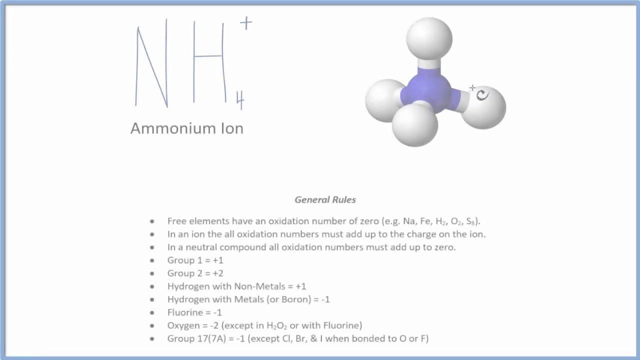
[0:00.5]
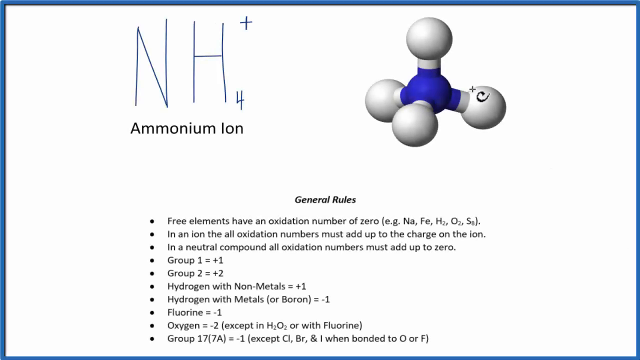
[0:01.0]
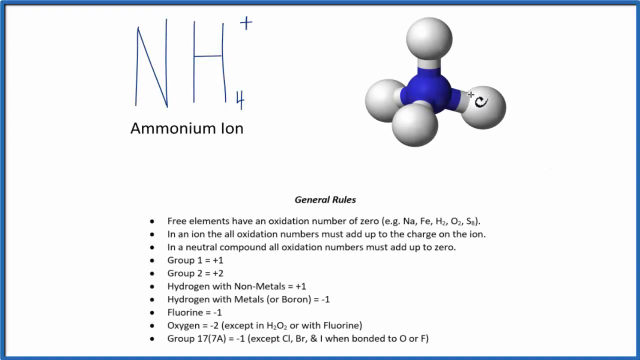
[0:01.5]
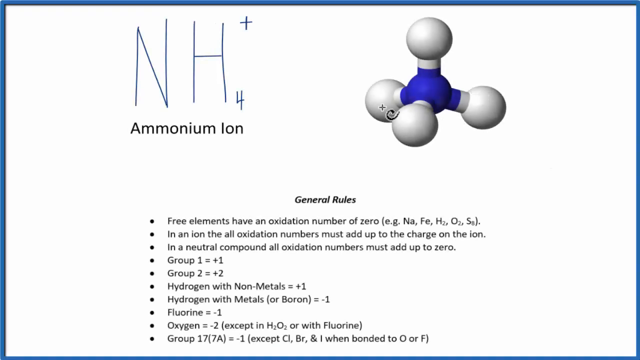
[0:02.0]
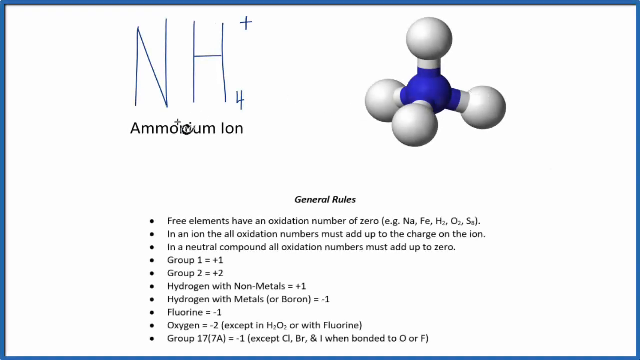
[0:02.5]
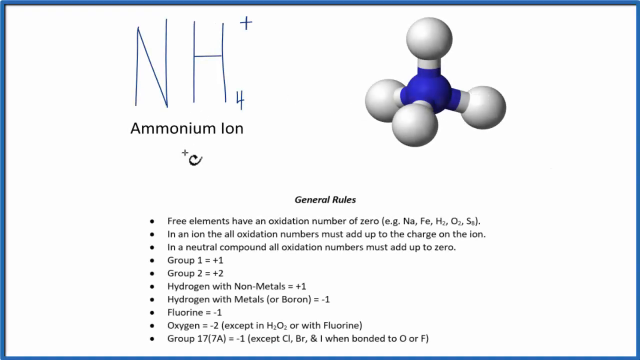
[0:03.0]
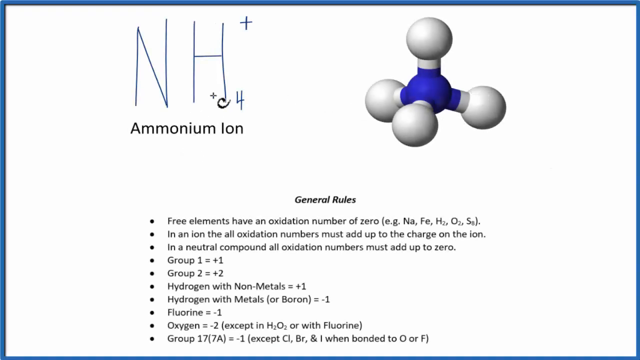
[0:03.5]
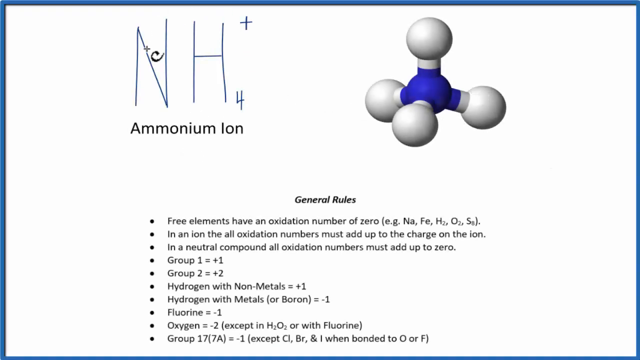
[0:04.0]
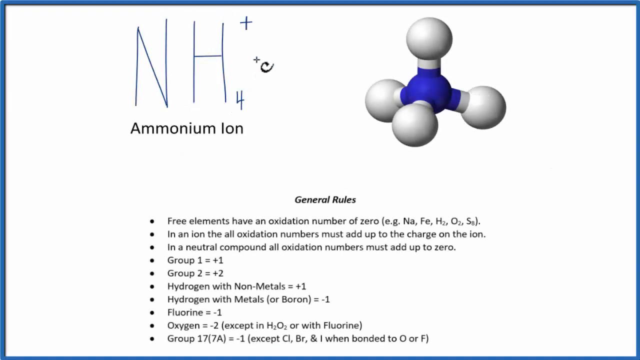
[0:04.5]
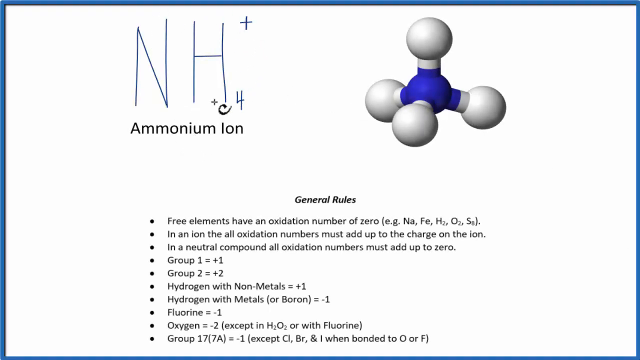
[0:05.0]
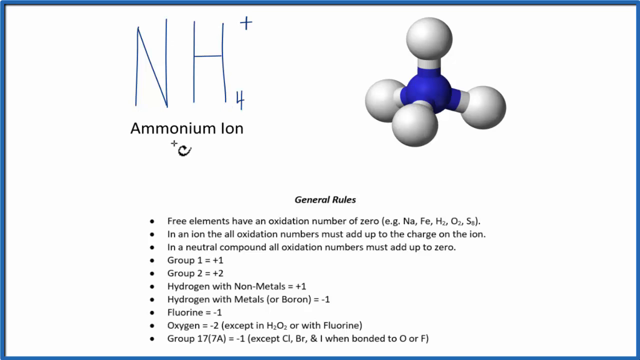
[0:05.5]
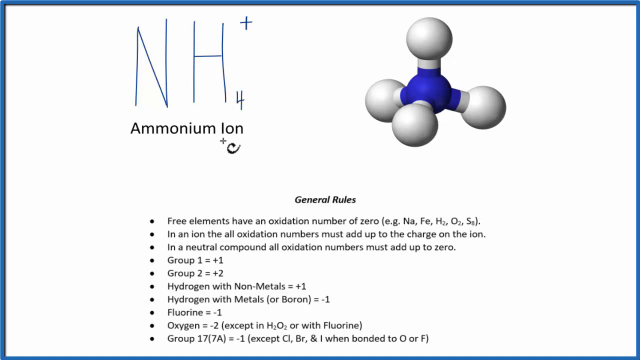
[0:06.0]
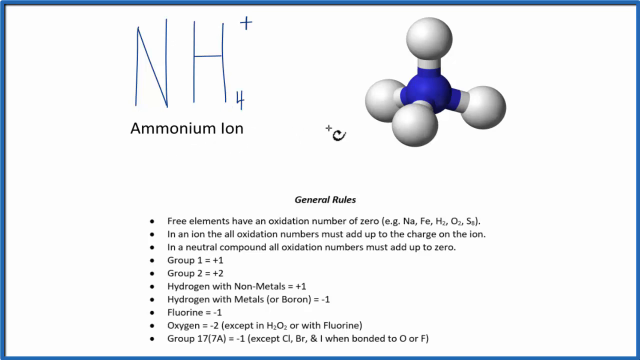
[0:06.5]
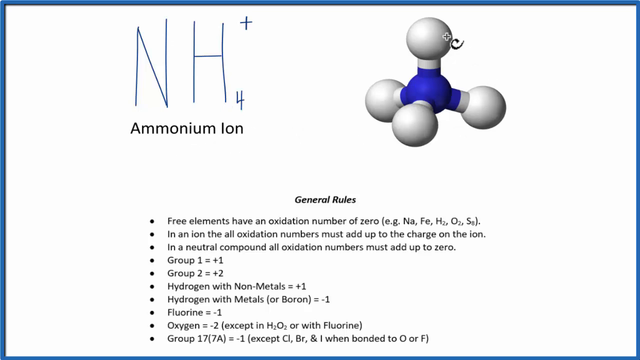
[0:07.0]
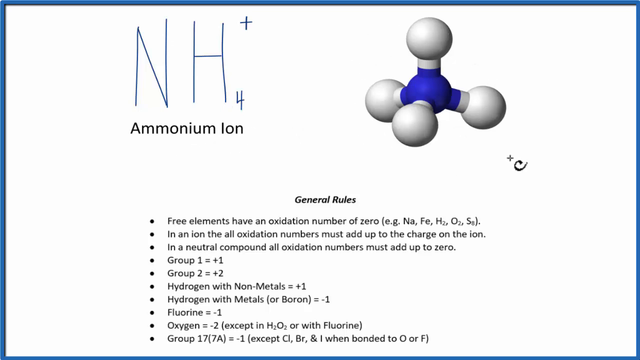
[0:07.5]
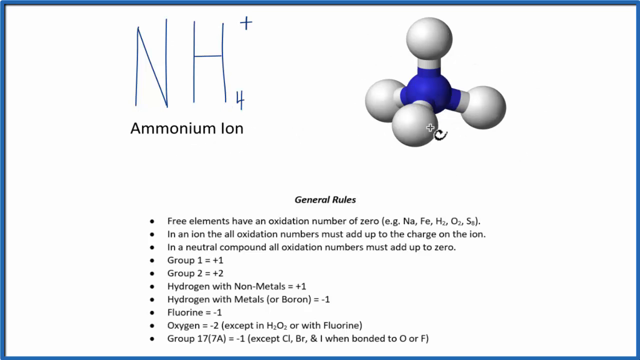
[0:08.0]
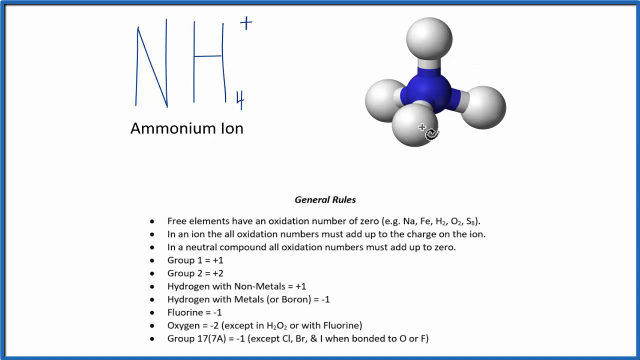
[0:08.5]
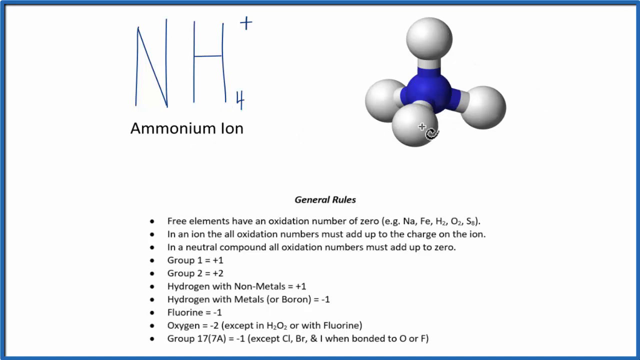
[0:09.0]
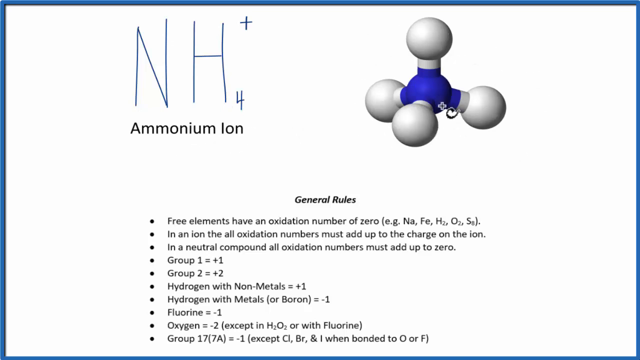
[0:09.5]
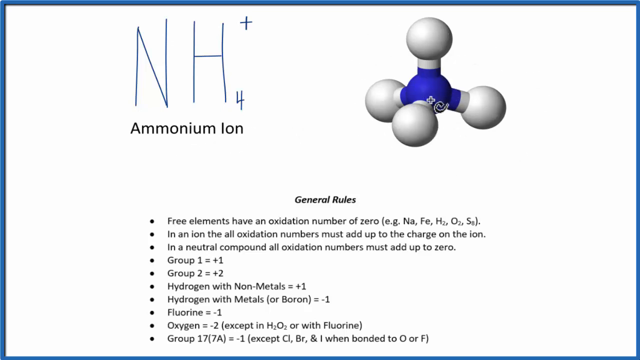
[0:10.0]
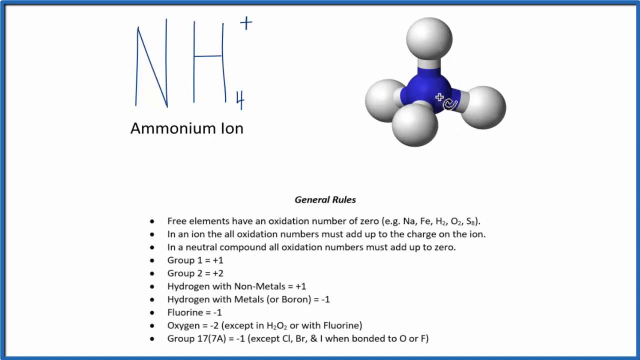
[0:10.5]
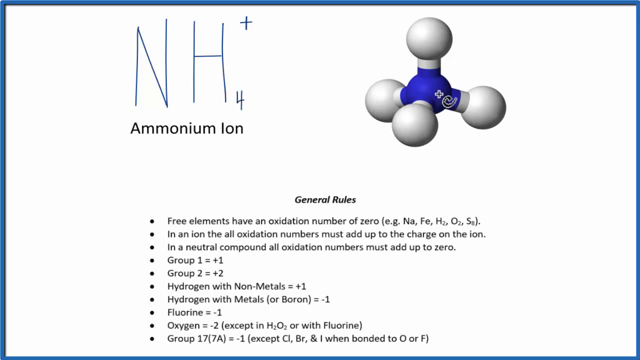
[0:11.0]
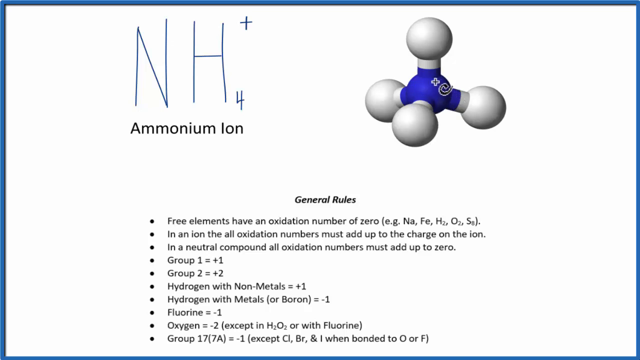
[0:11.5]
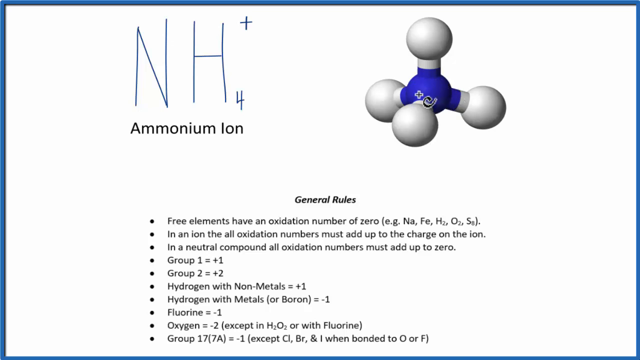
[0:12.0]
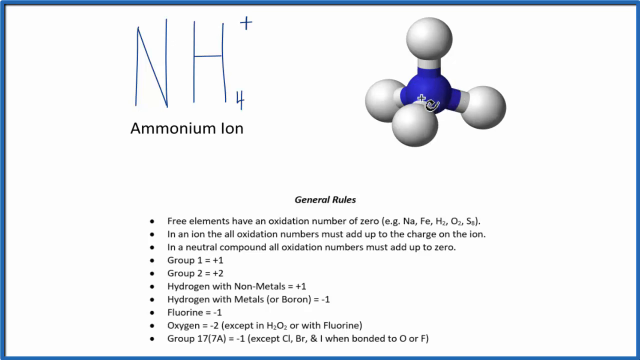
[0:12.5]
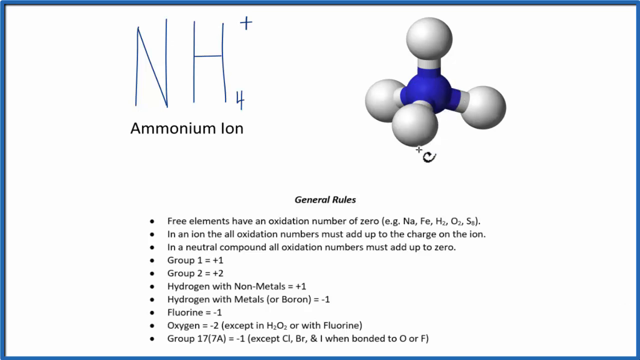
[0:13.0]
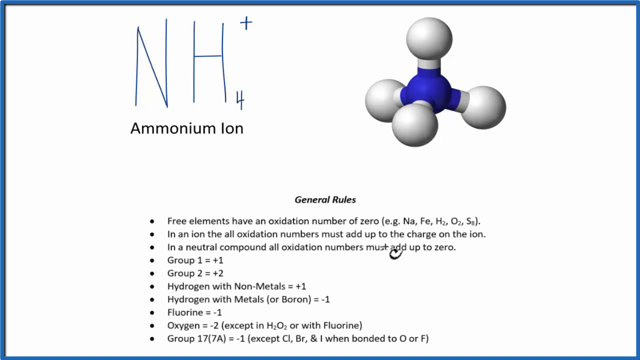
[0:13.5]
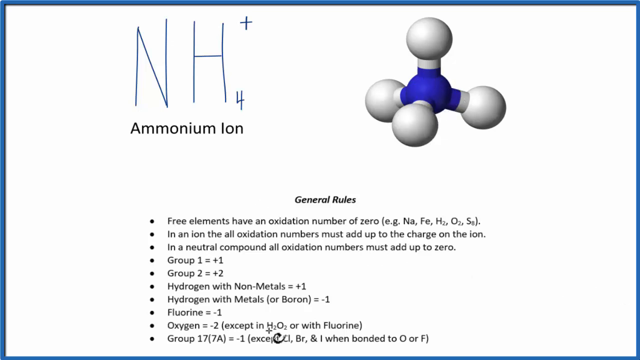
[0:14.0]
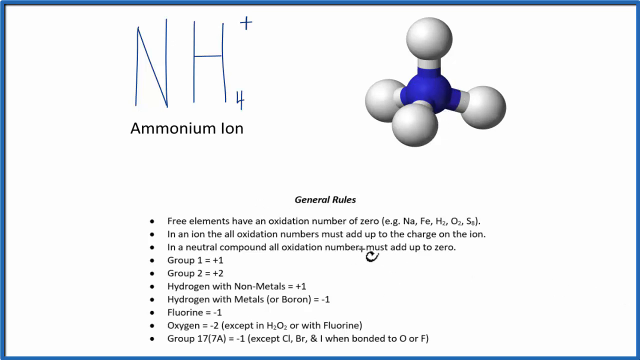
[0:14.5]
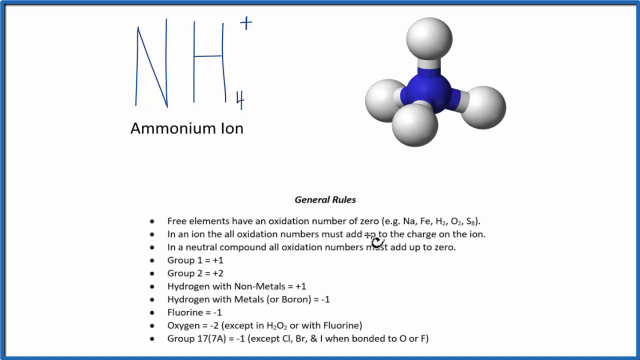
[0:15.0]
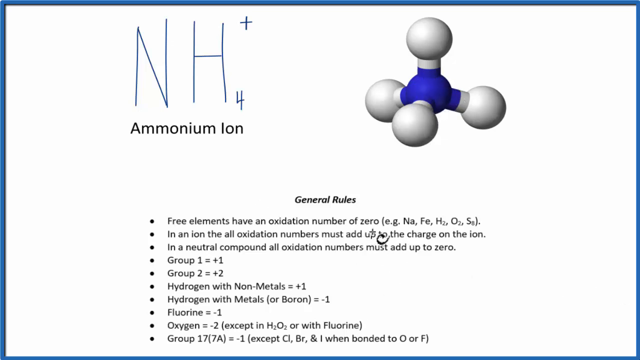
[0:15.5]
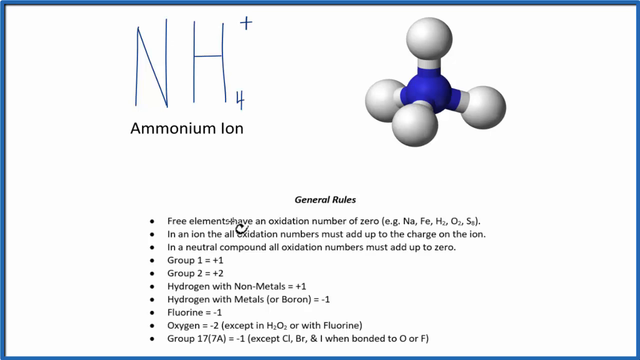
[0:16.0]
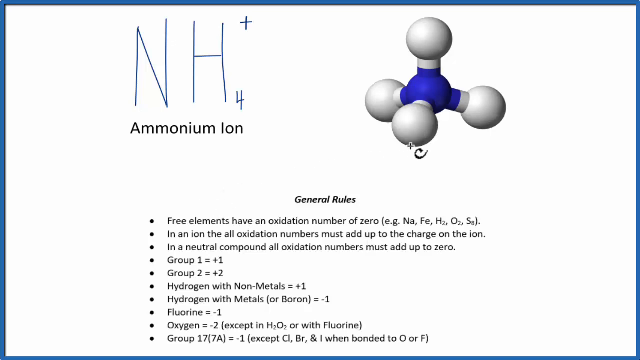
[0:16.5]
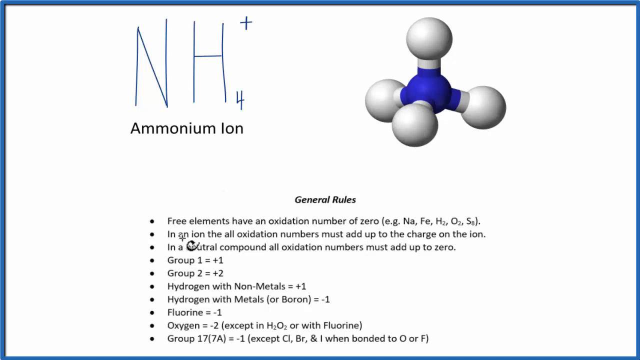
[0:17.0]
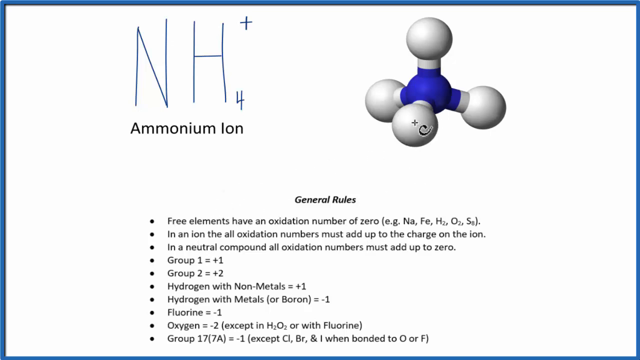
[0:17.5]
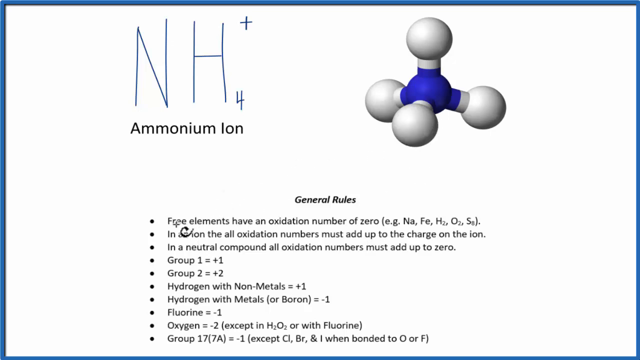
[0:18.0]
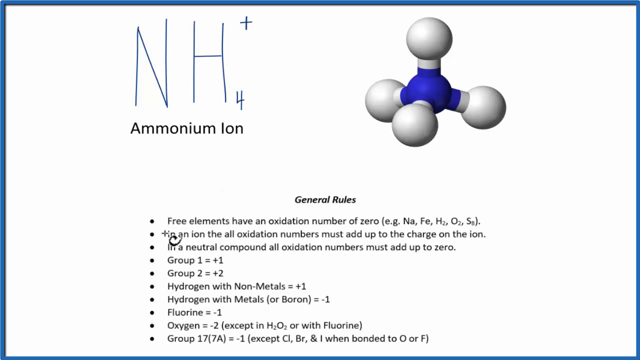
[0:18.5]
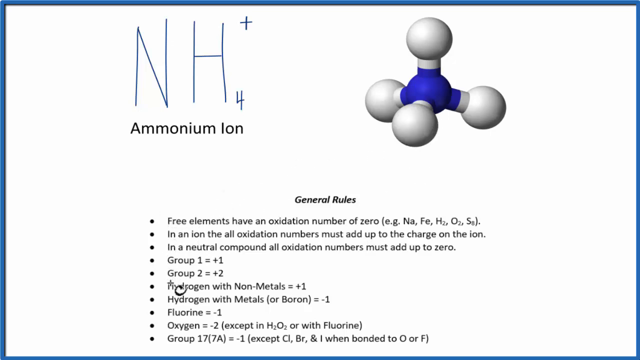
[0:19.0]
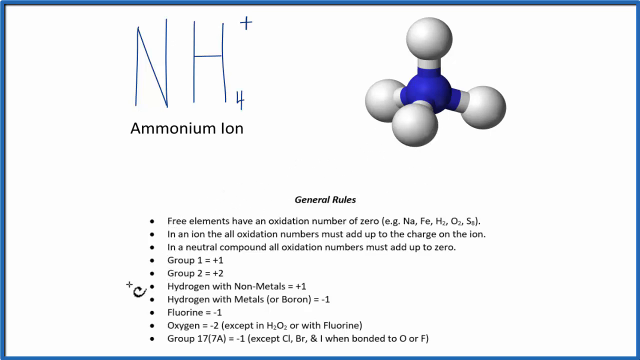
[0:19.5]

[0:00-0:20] A slide shows the text "ammonium ion NH4+" along with a set of general rules that read: "three elements have an oxidation number of zero", "In an ion the all oxidation numbers must add up to the charge on the ion", "in a neutral compound all oxidation numbers must add up to 0", "Group 2 is equal to plus 2", "hydrogen with non metals equals to plus 1", "hydrogen with metals or boron is equal to minus 1", "Fluorine is equal to minus 1", "oxygen is equal to minus 2 except in H2O2 or with fluorine", and "group 17 7A is equal to minus 1". An icon of the ammonium ion is also on the screen, and someone moves the mouse cursor over the slide, pointing out the general rules and the icon.